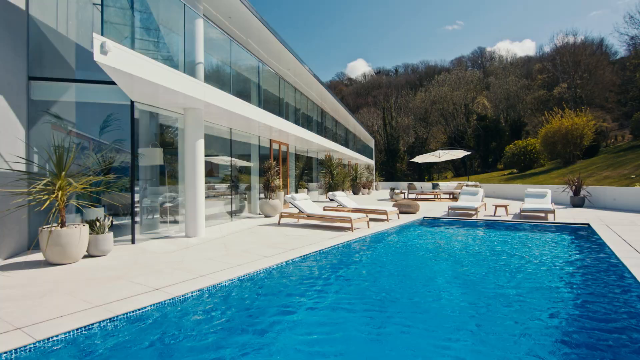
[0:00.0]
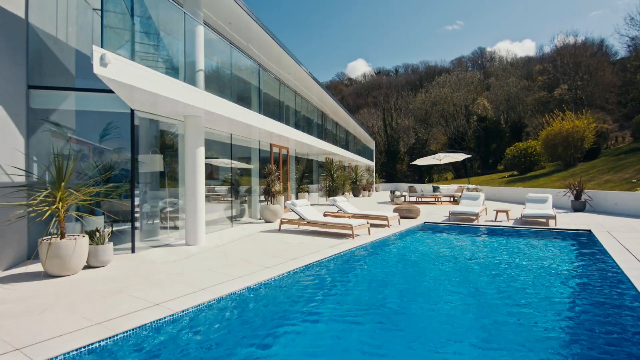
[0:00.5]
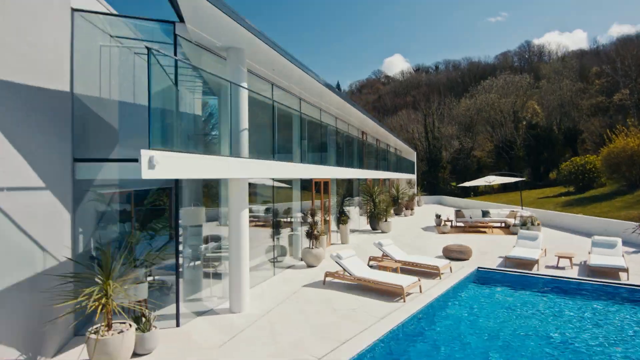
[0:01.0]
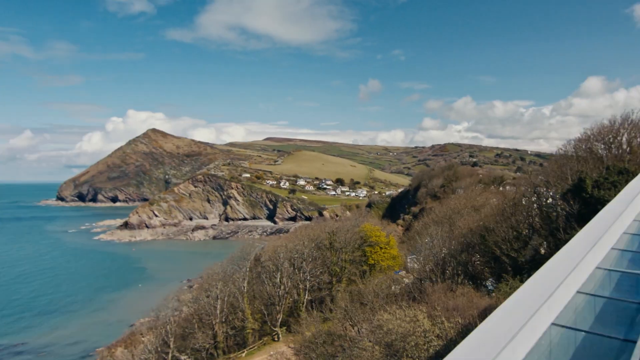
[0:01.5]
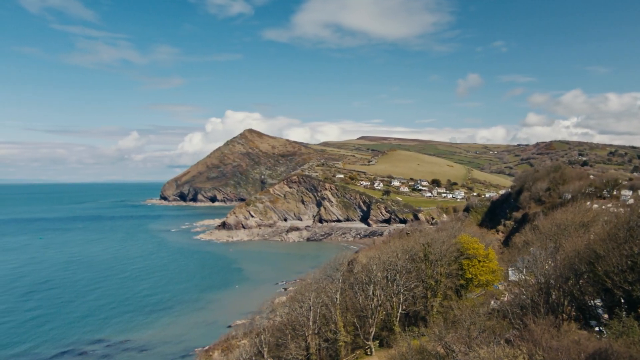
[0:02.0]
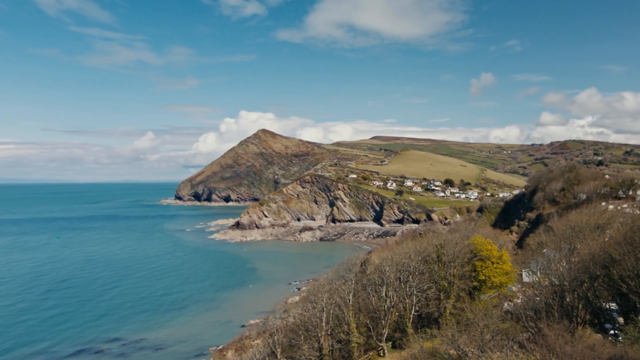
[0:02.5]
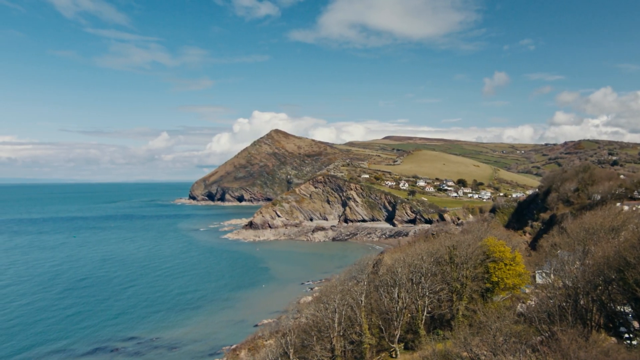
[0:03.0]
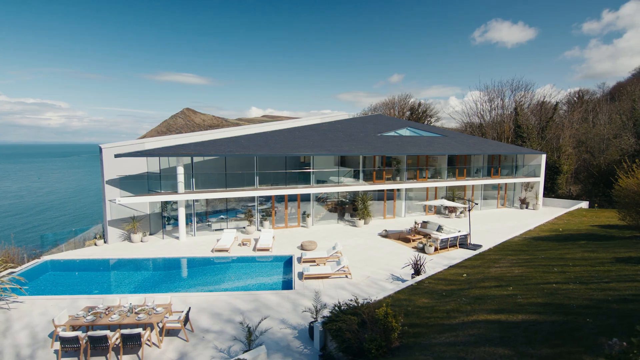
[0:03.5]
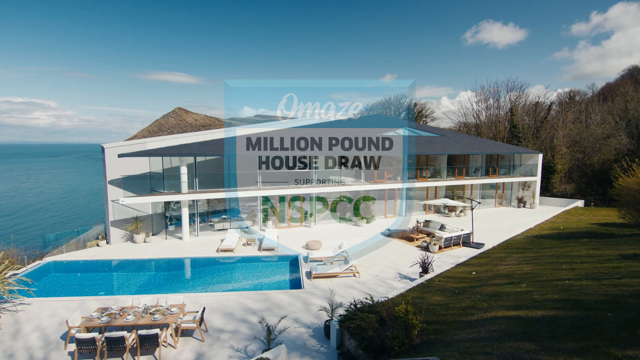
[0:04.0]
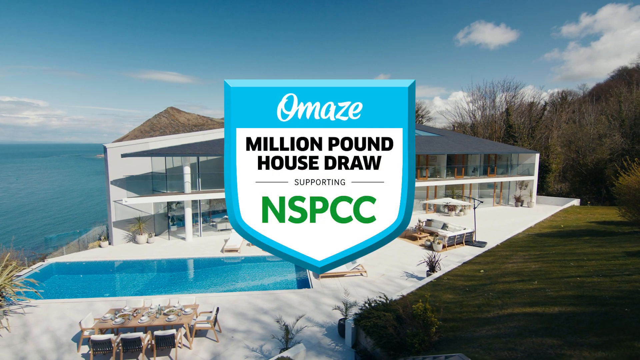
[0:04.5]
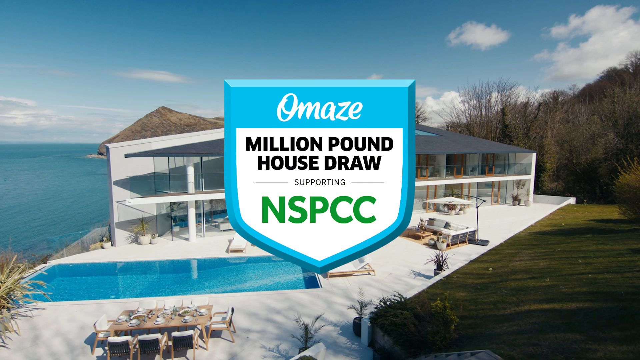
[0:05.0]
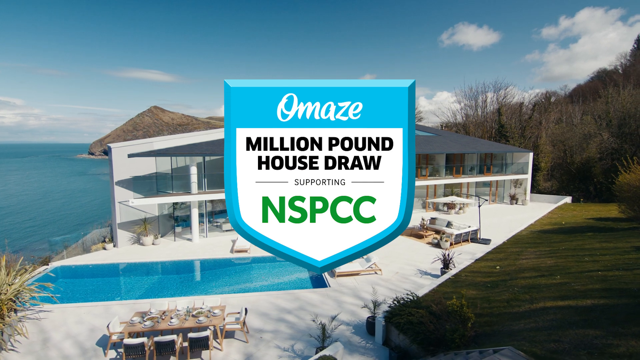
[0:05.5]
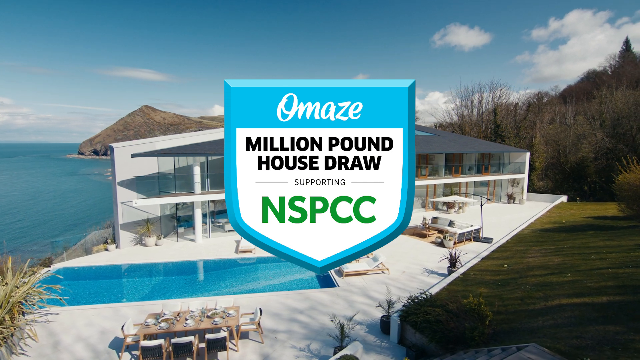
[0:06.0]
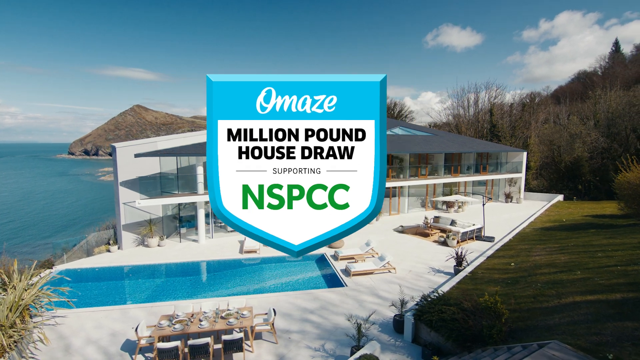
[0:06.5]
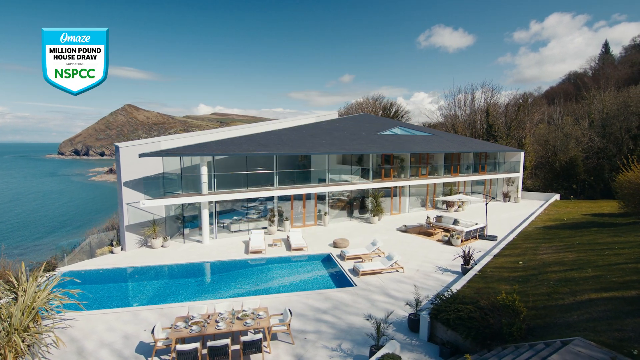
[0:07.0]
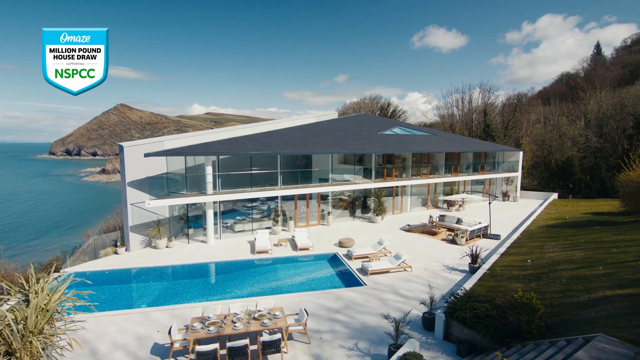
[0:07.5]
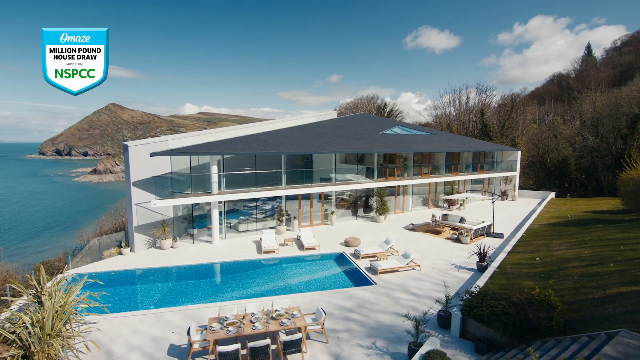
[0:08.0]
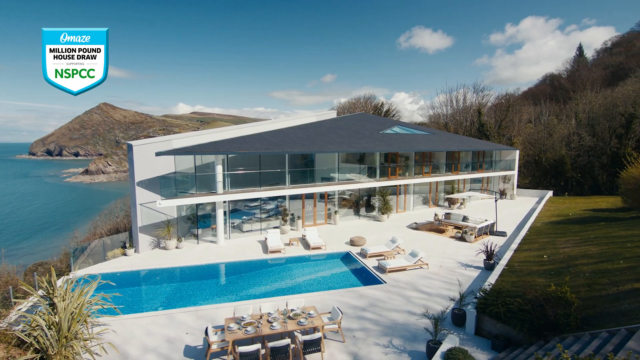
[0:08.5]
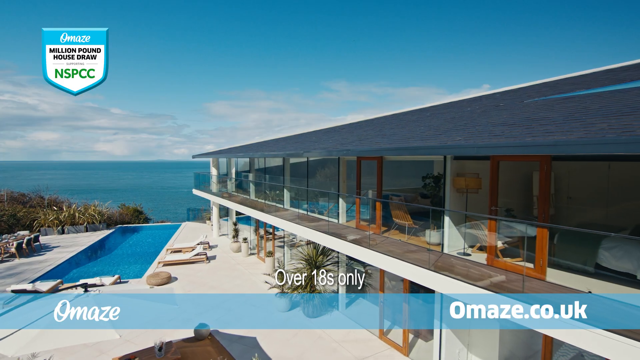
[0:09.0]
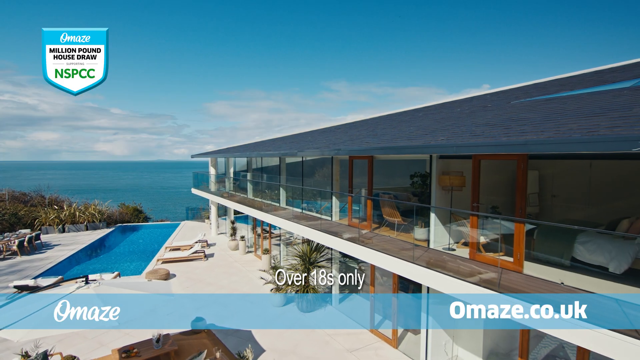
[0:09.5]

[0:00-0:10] The video shows a resort surrounded by green trees and green grass. The building is white but made mainly of glass, with glass all over and white poles. There is a swimming pool, along with beds for relaxing and sunbaking, flowers, pot plants and a nearby beach. A white umbrella is on the side. The NSPCC logo is displayed along with the text "million pound house draw".